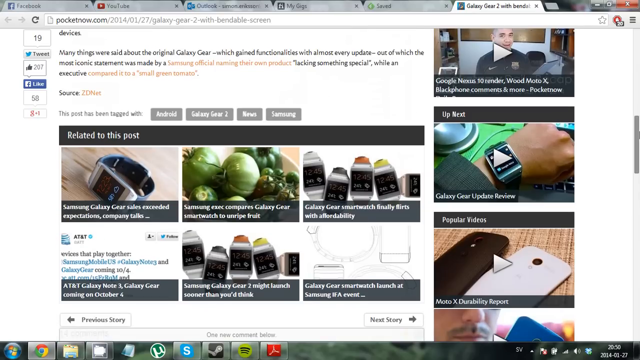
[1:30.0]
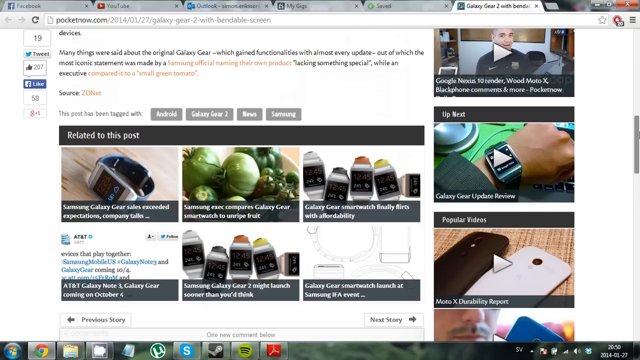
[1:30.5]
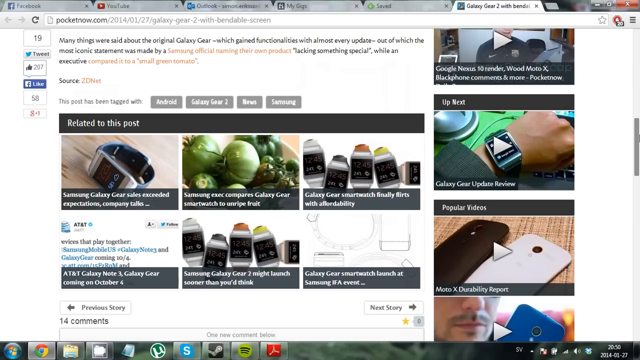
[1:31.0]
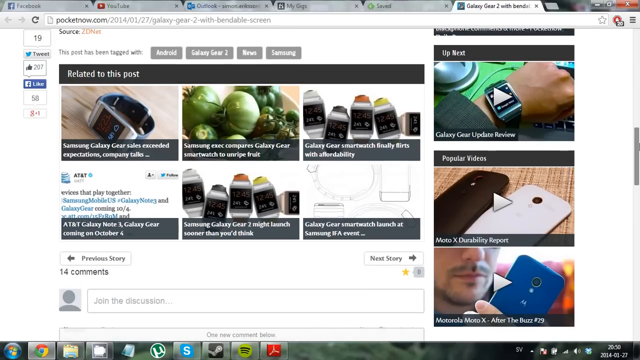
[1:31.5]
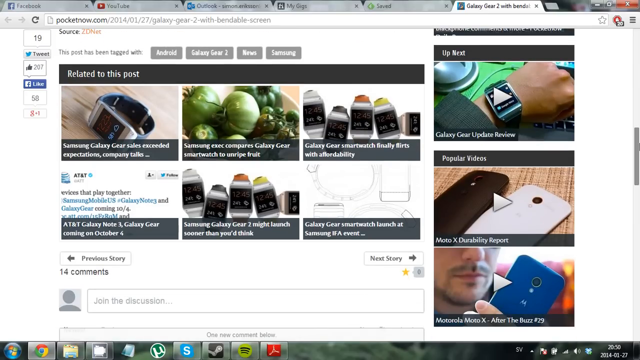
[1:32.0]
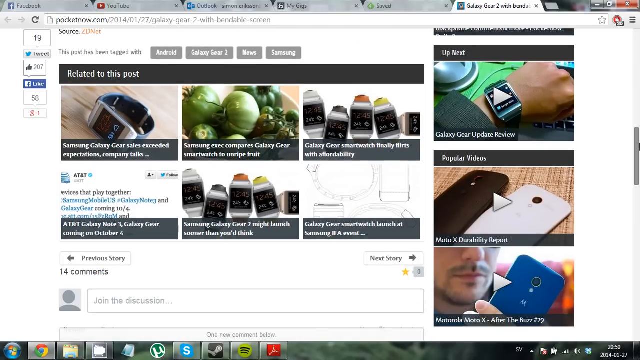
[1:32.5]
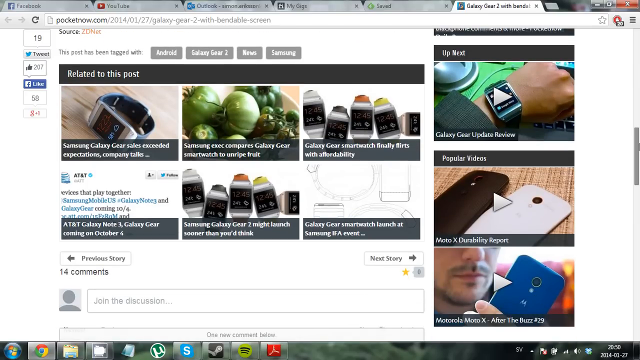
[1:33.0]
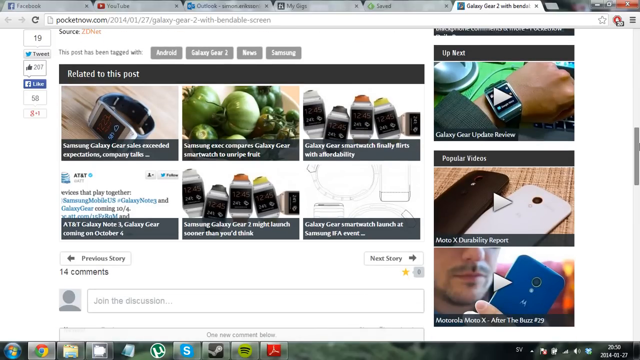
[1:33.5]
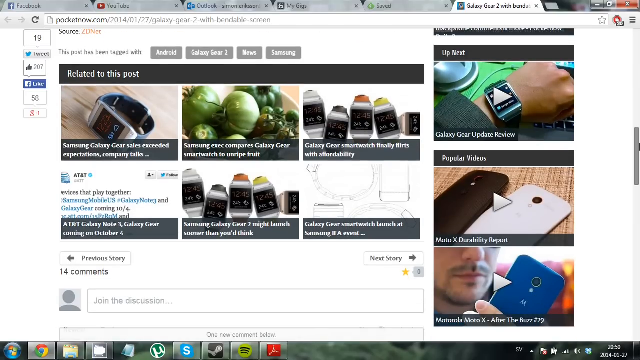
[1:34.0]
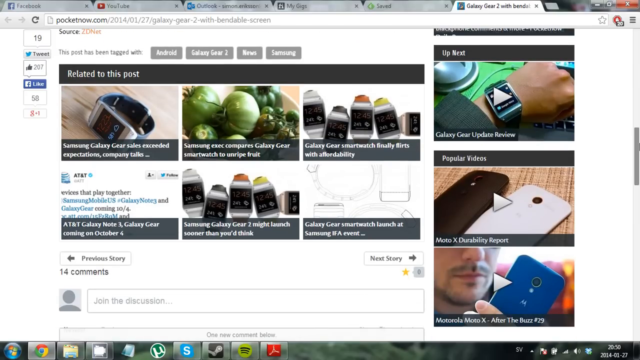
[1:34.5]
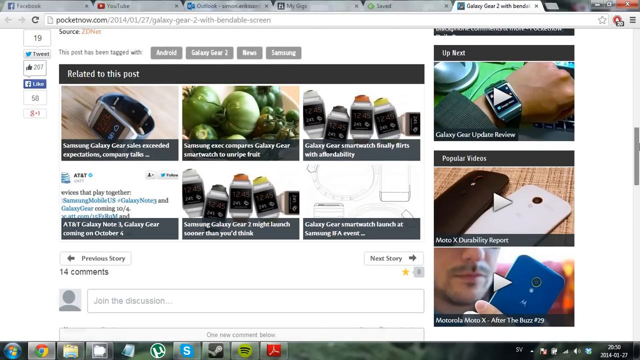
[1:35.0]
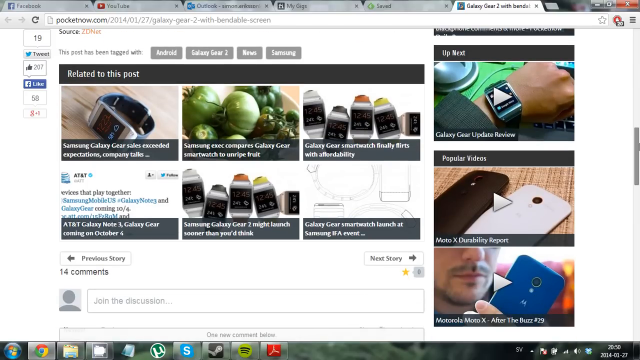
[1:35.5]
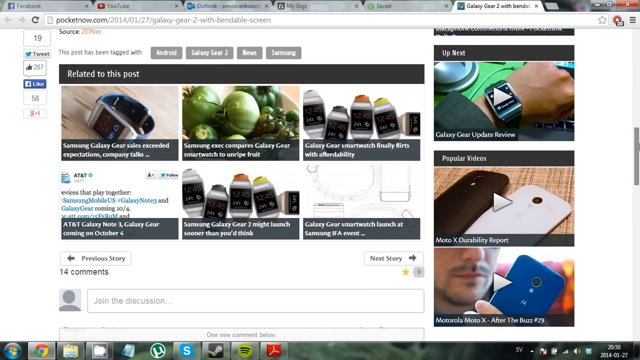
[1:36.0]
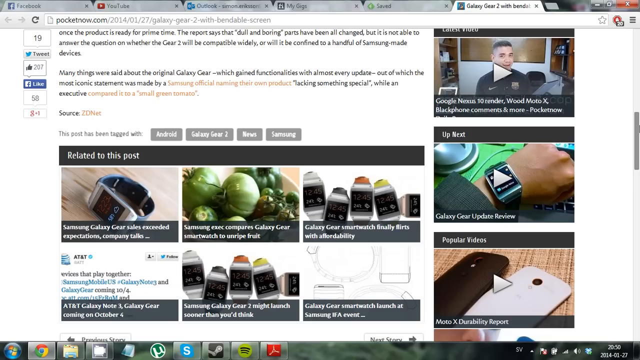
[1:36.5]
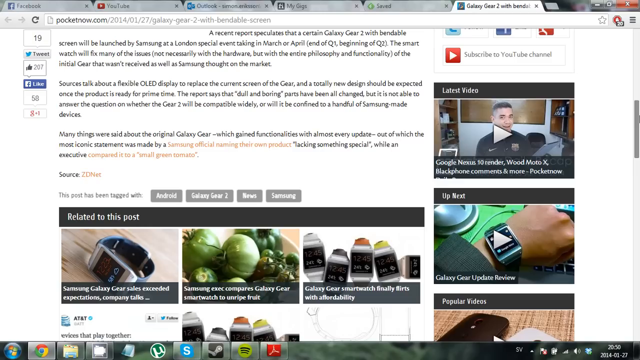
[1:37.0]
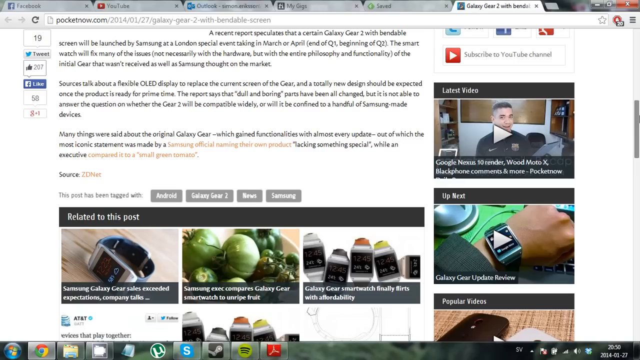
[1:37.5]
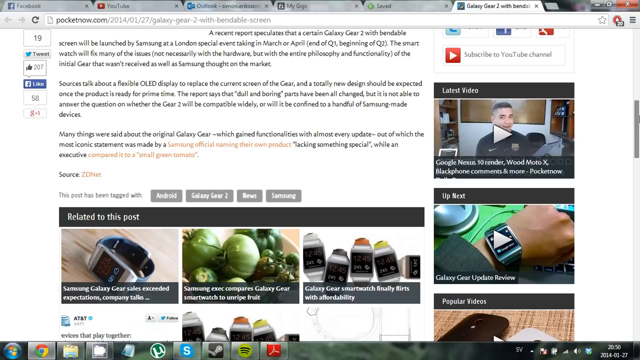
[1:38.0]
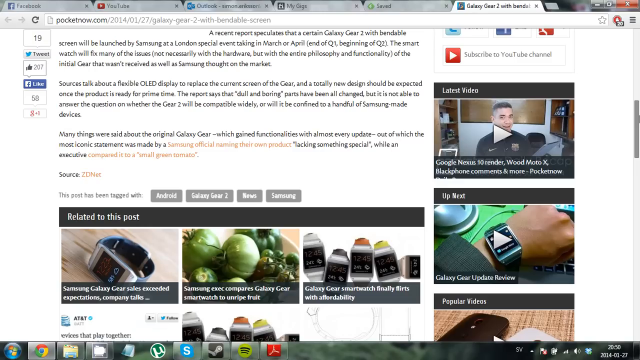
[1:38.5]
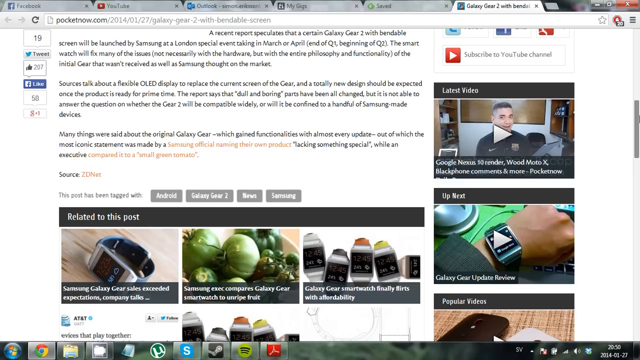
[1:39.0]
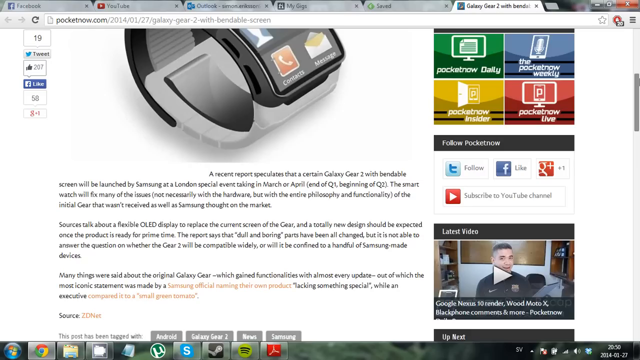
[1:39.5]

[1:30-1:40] The person scrolls down, and some fruits, which are not large, are shown.